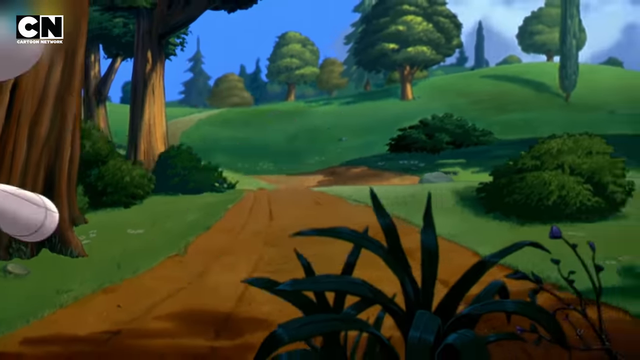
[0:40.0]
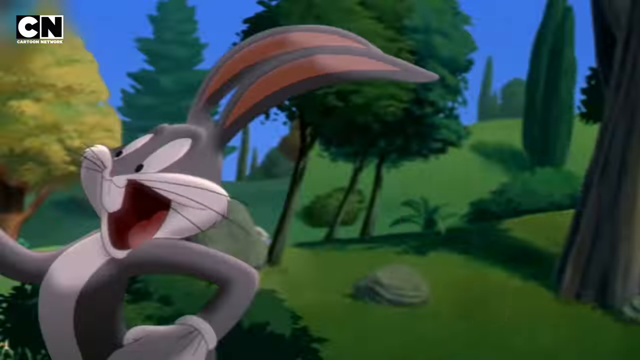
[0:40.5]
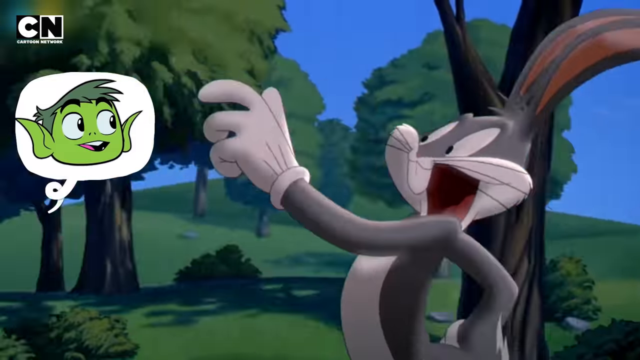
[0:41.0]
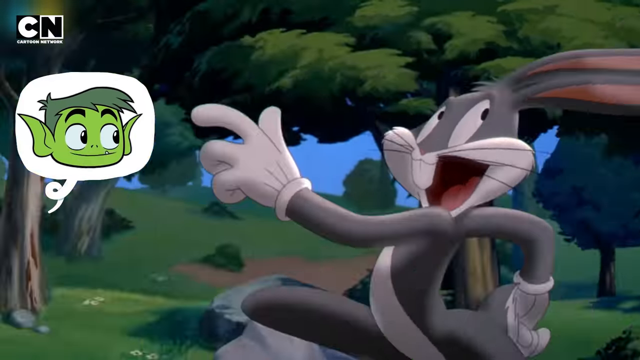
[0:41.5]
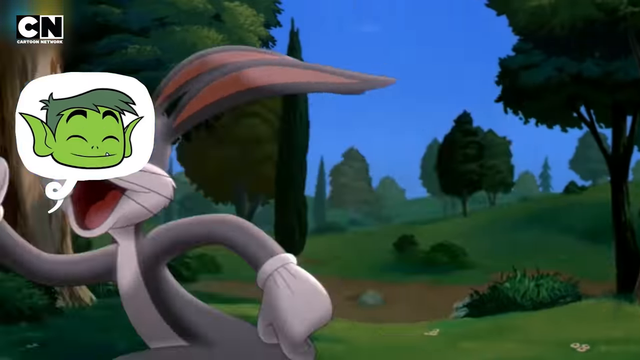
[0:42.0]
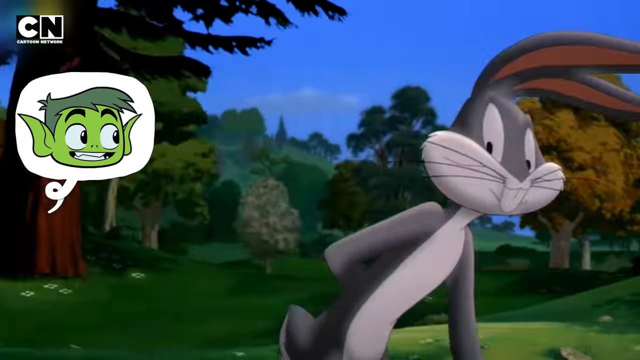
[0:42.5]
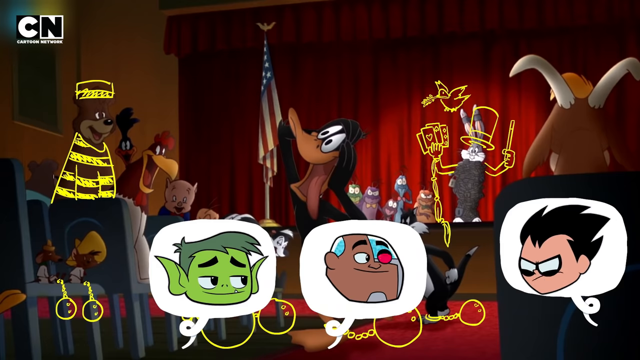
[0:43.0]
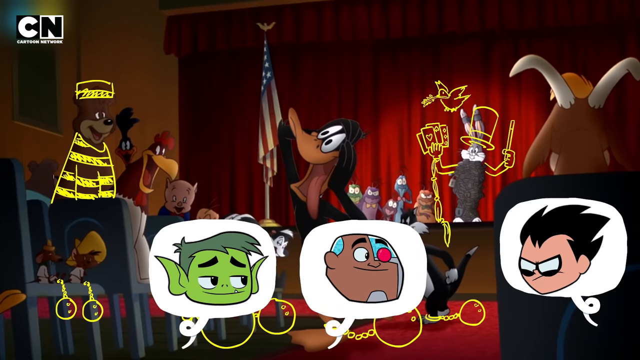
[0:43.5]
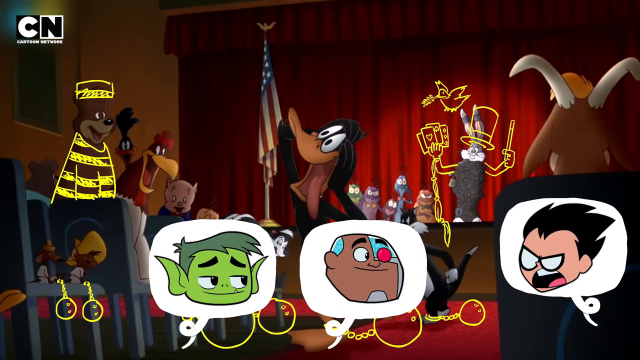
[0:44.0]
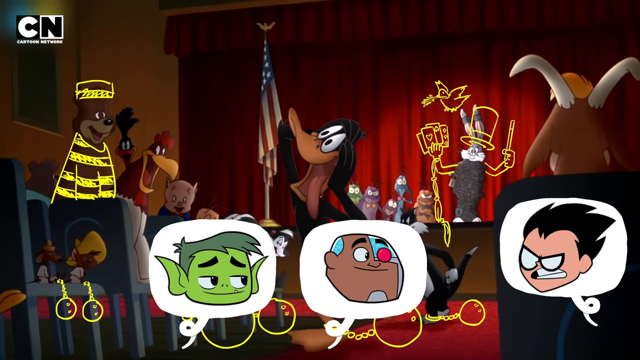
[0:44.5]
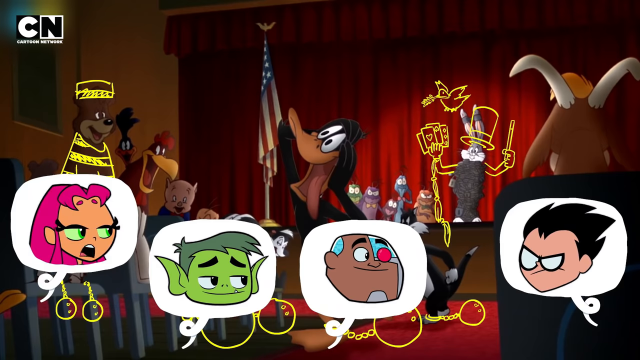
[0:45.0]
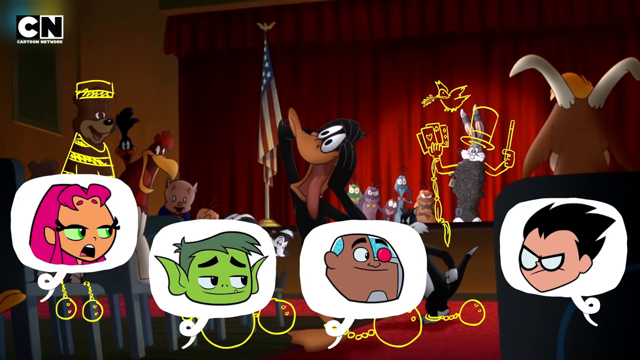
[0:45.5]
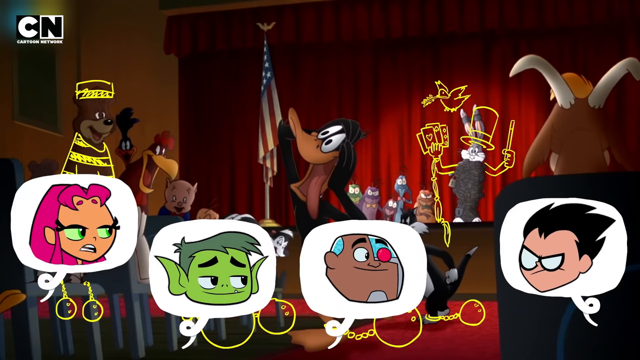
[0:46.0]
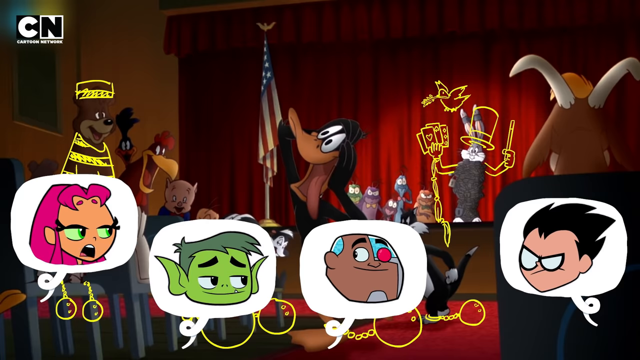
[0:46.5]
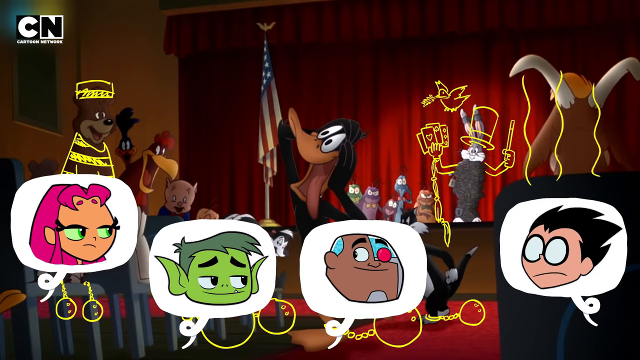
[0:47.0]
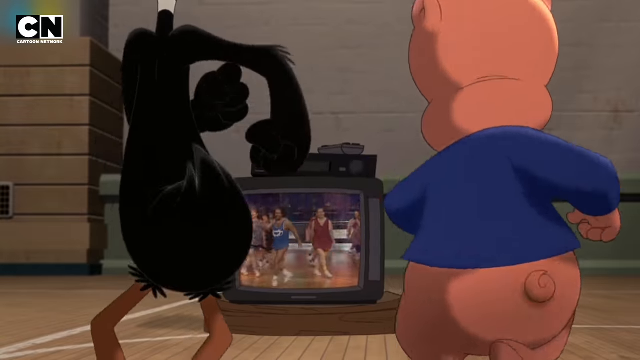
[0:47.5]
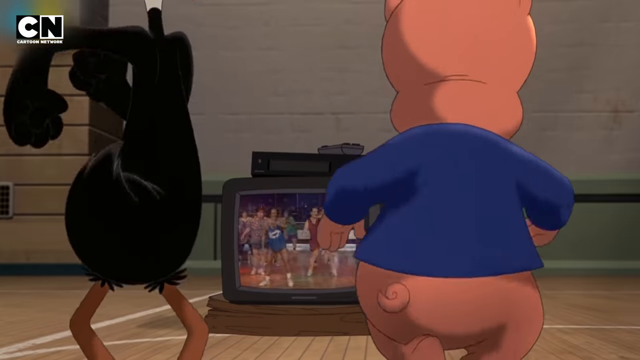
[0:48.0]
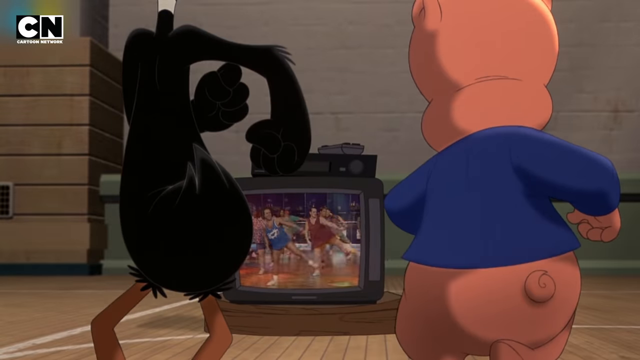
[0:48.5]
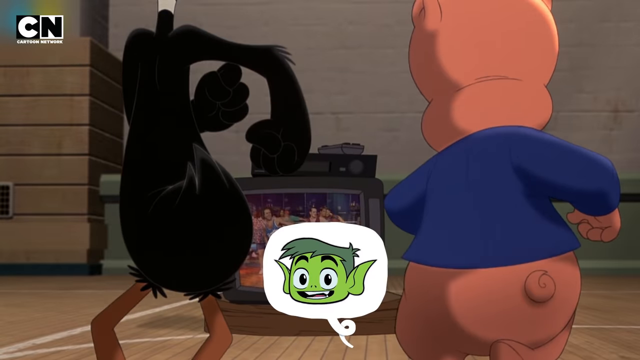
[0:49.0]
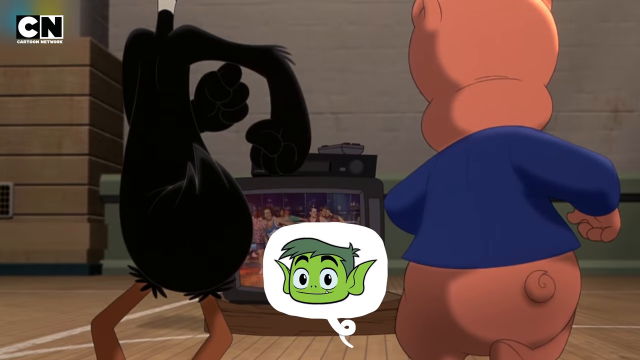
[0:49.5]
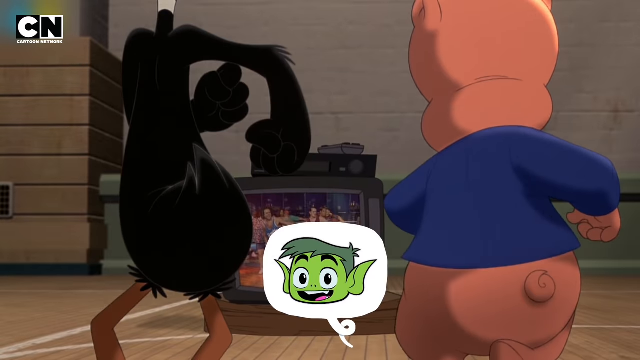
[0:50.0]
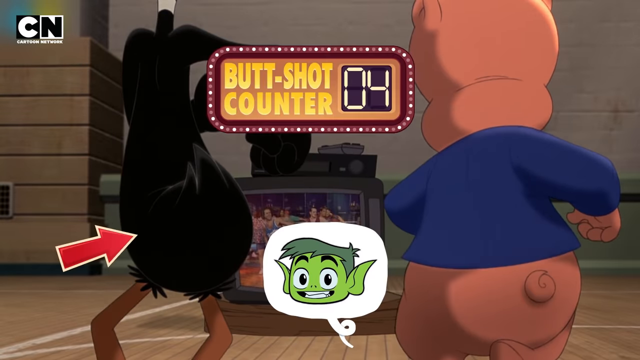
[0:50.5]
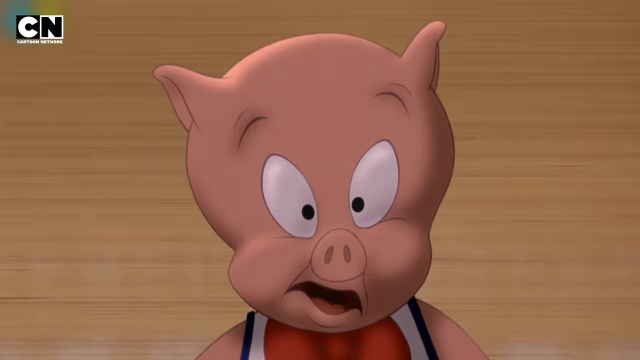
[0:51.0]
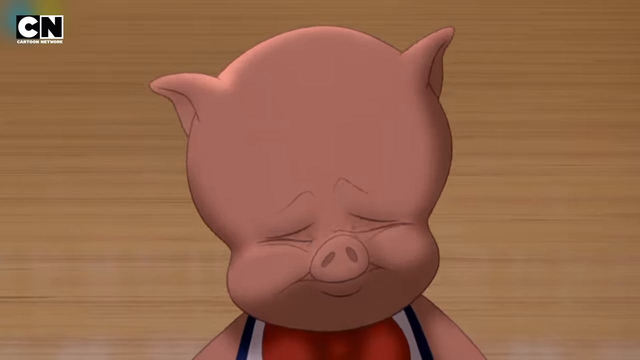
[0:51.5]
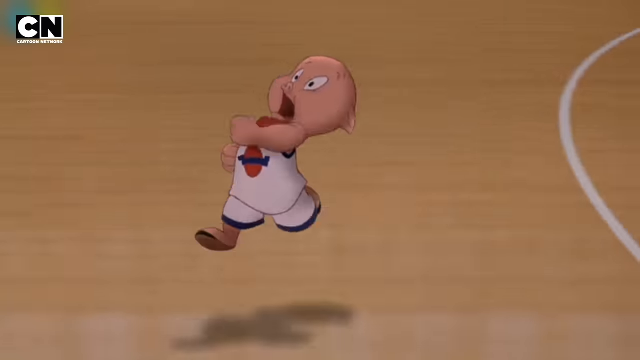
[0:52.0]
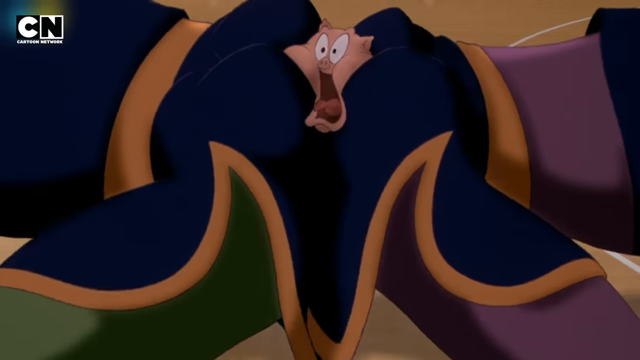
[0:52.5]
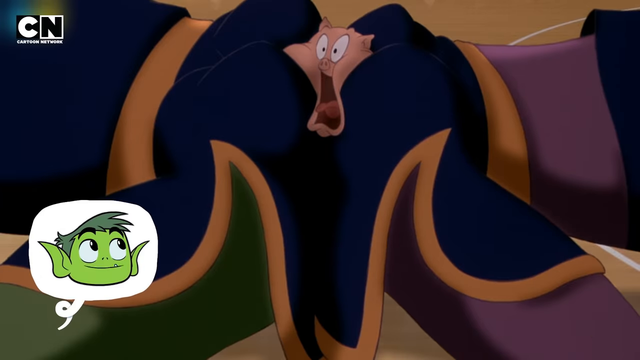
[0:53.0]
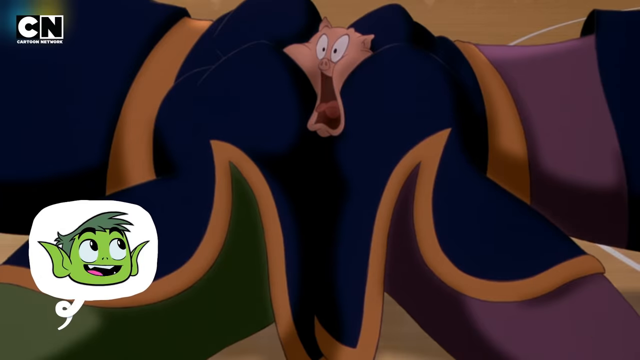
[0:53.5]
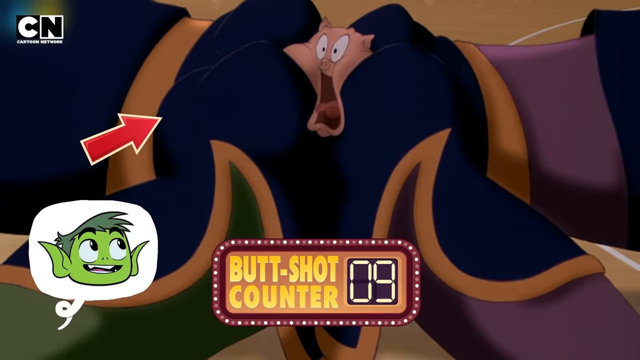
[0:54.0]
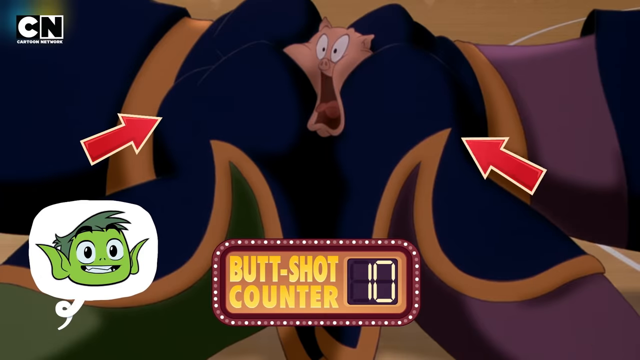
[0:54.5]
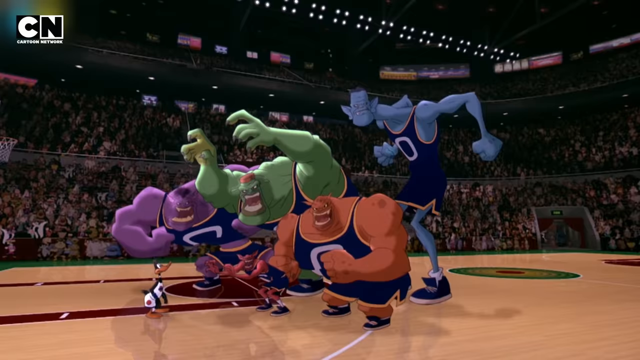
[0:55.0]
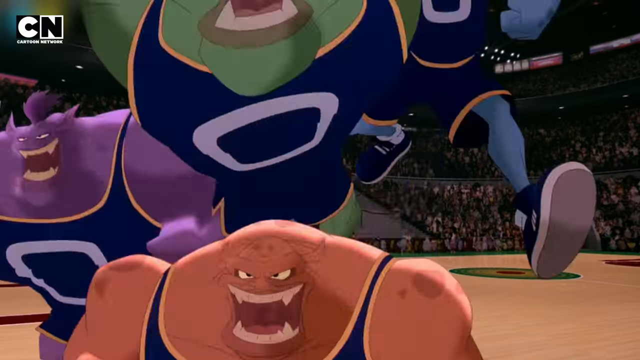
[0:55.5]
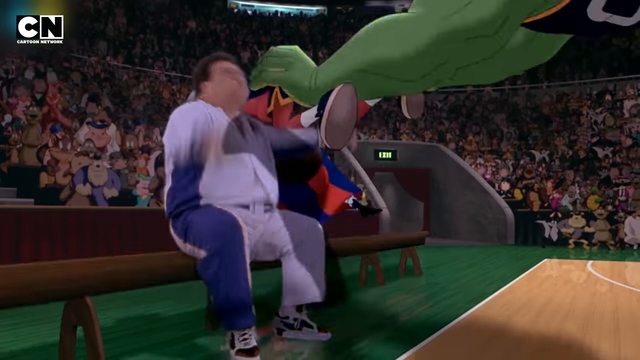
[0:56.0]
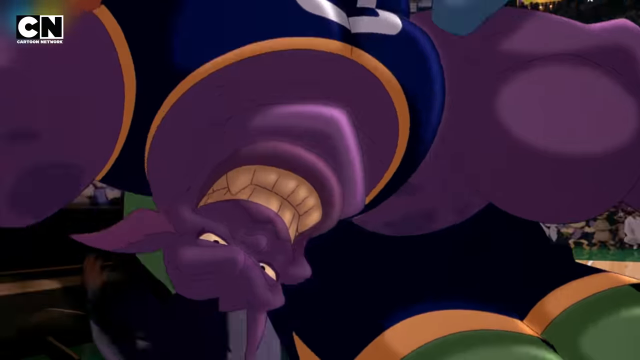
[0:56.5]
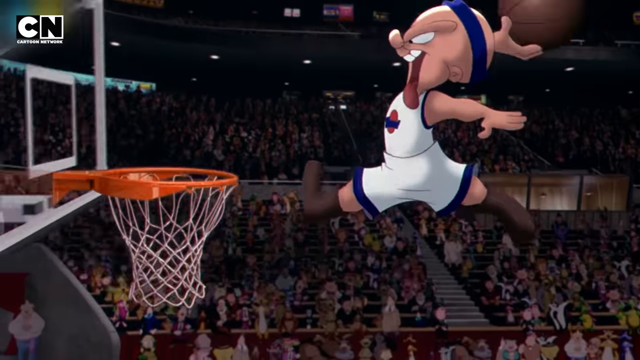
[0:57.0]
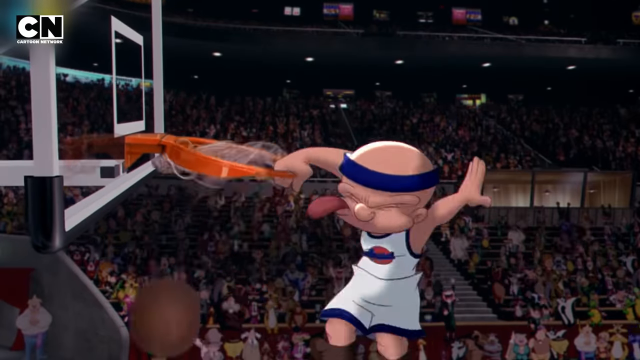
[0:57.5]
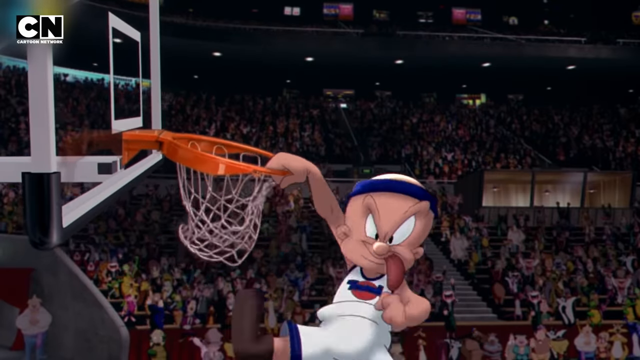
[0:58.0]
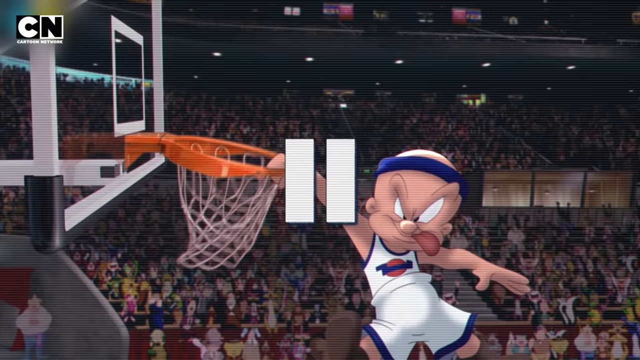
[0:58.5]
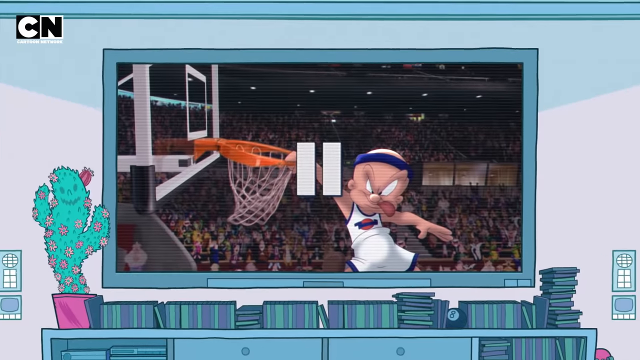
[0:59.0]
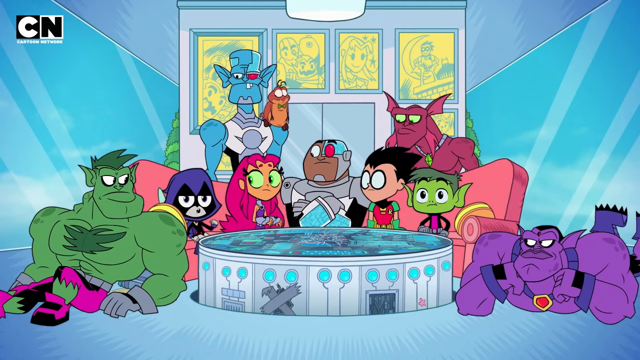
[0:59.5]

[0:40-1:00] This Cartoon Network cartoon mixes Warner Bros. animated characters with modern characters. Bugs Bunny runs through the woods, and a little thought bubble appears with the face of a talking green character with pointy ears. Three thought bubbles then show the faces of modern characters who appear to be talking, while in the background a theater is filled with Warner Bros. characters: Bugs Bunny is on stage, and Daffy Duck, Porky Pig and others sit in the audience. A fourth thought bubble appears with the girl with pink hair, and all of these characters talk to each other. Daffy Duck and Porky Pig dance to a video playing on a television in front of them that looks like an exercise video. The thought bubble with the speaking character appears again, along with a button that says "Buttshot Counter 4, 5". A basketball game is played, and the Buttshot Counter appears again; the cartoon characters playing basketball include Elmer Fudd and Porky Pig. The scene switches briefly to modern characters sitting in a room around what looks like a circular table.